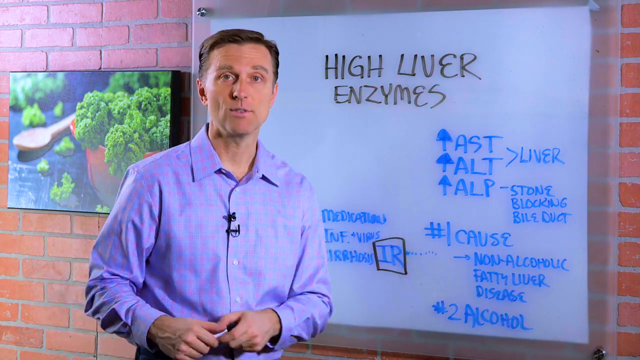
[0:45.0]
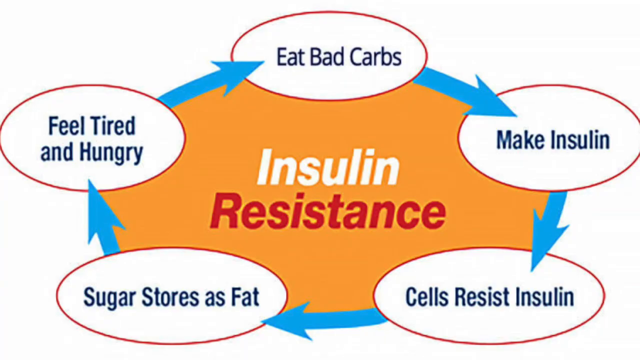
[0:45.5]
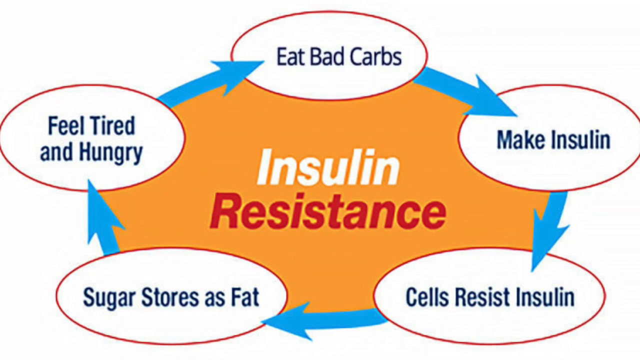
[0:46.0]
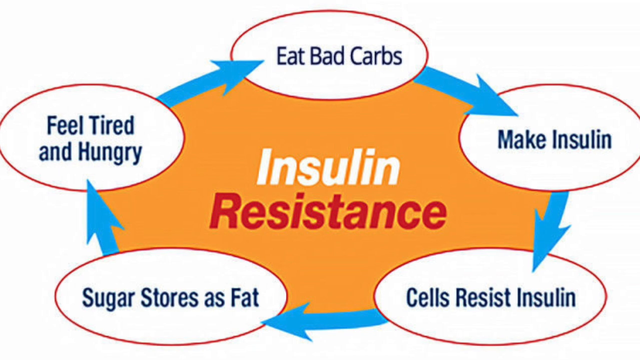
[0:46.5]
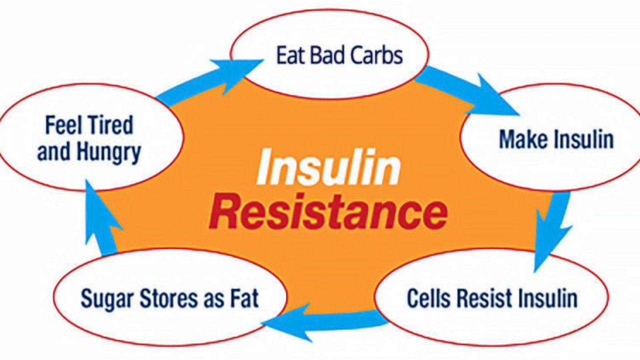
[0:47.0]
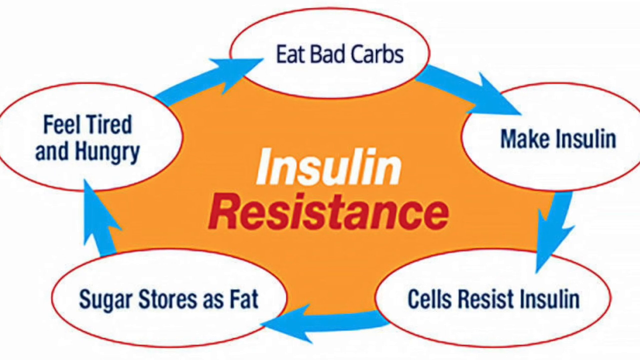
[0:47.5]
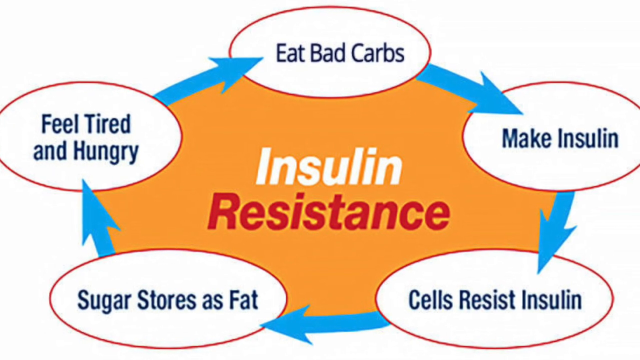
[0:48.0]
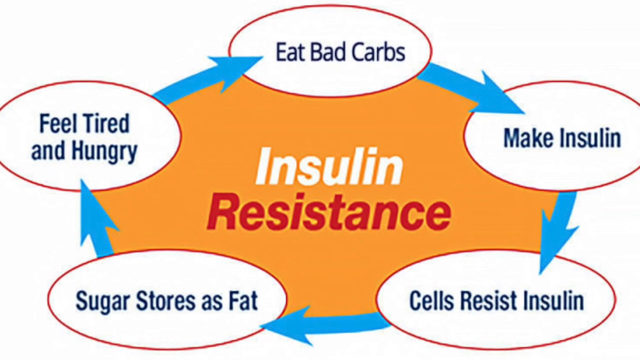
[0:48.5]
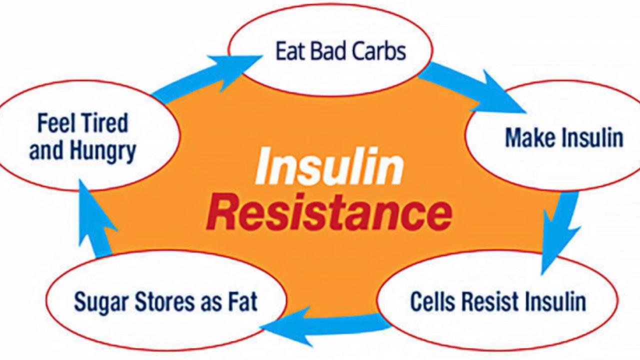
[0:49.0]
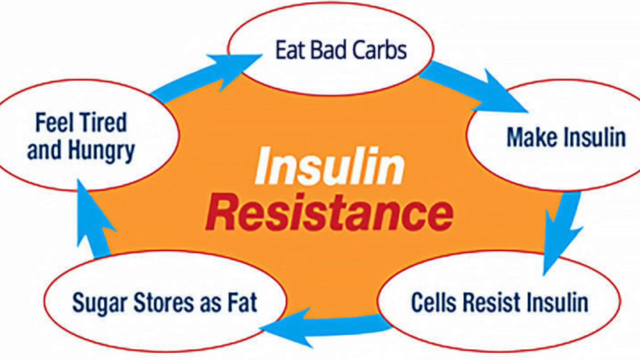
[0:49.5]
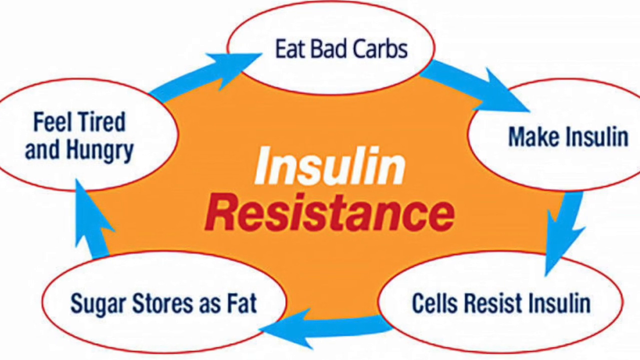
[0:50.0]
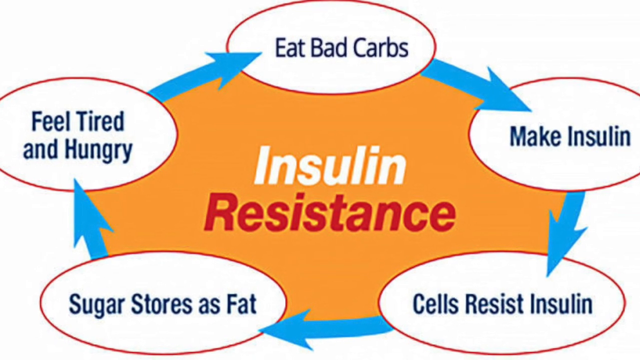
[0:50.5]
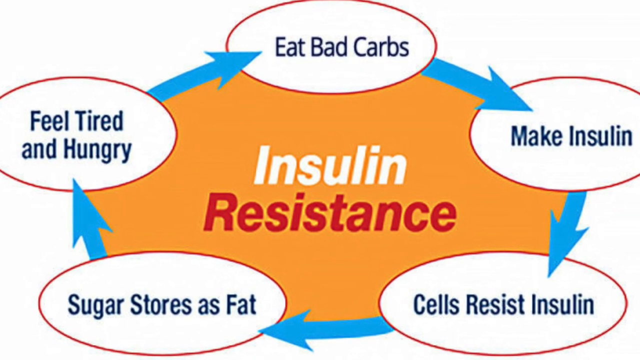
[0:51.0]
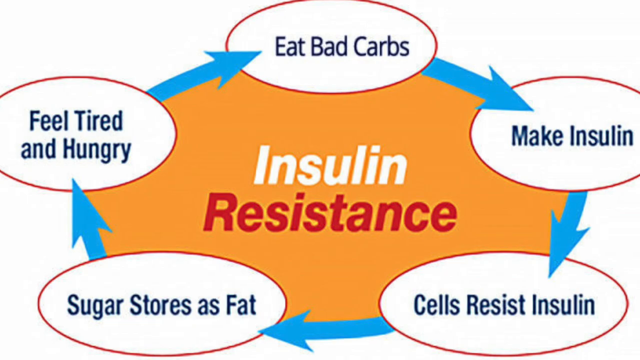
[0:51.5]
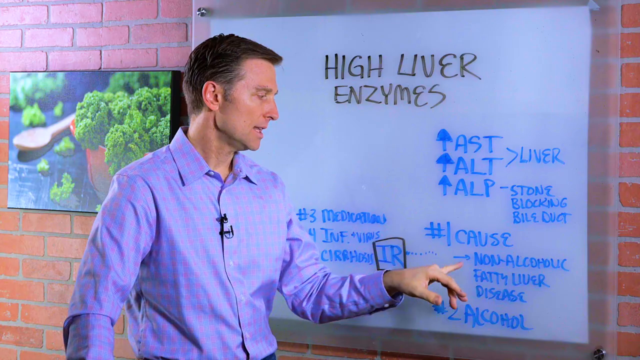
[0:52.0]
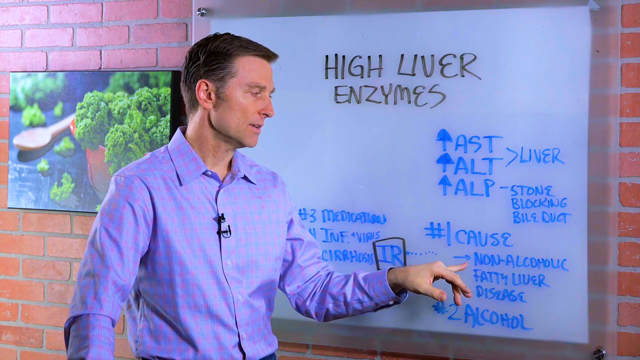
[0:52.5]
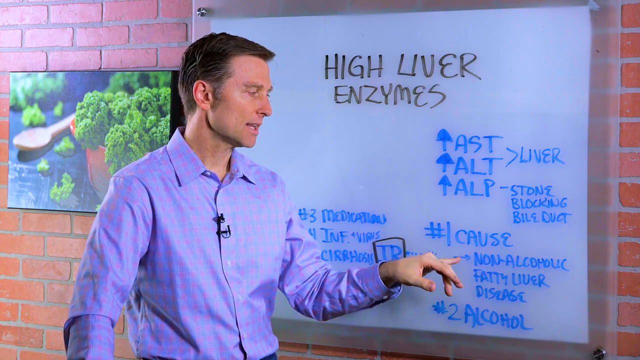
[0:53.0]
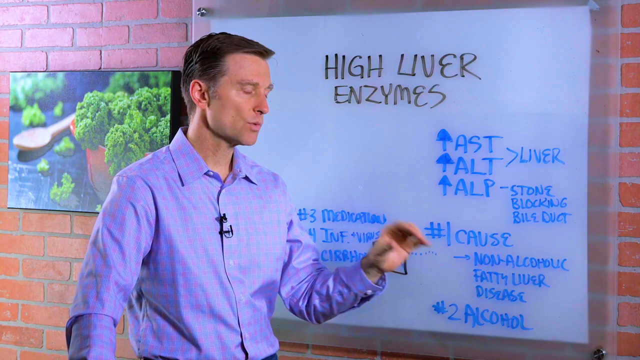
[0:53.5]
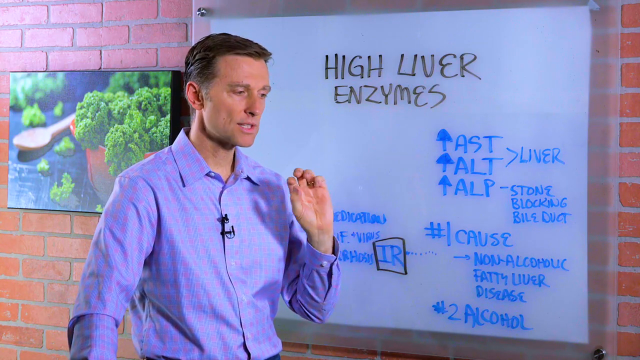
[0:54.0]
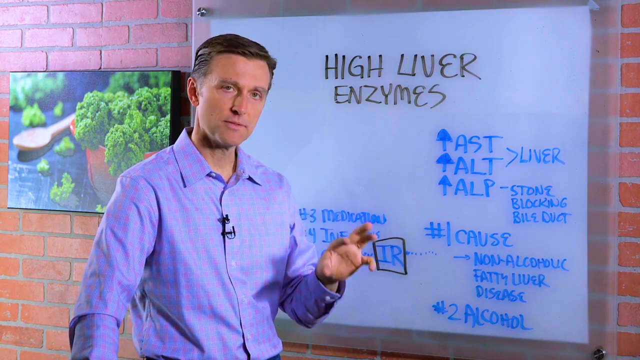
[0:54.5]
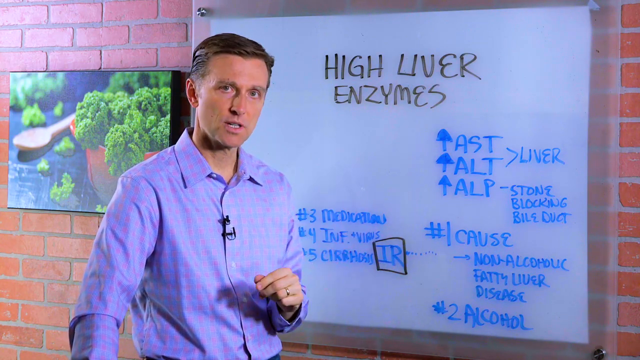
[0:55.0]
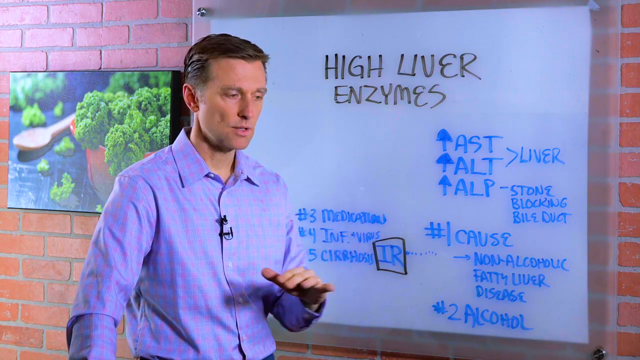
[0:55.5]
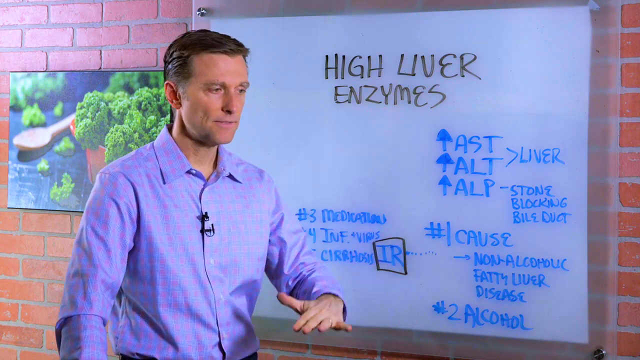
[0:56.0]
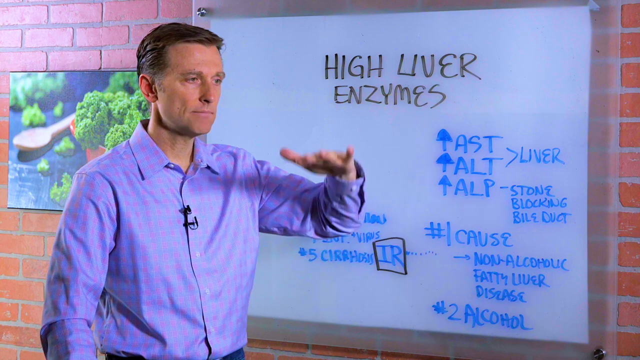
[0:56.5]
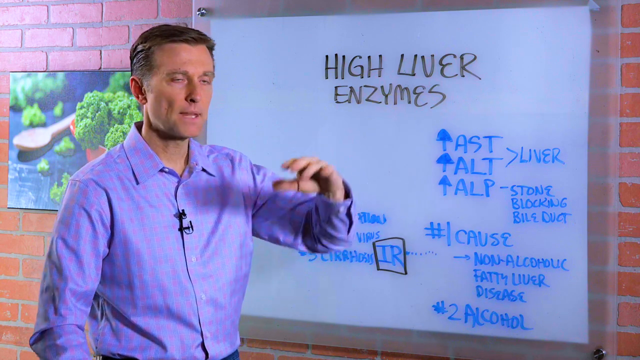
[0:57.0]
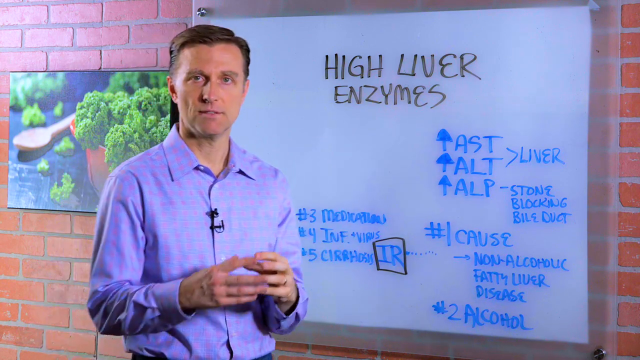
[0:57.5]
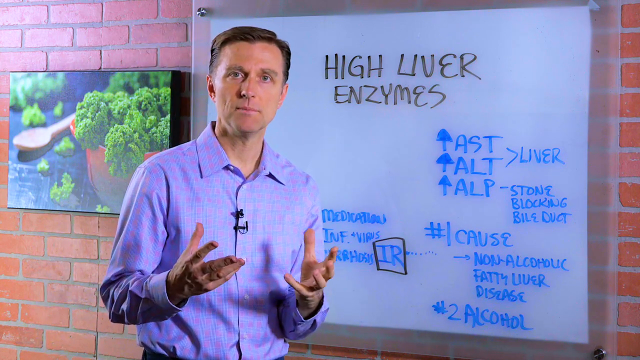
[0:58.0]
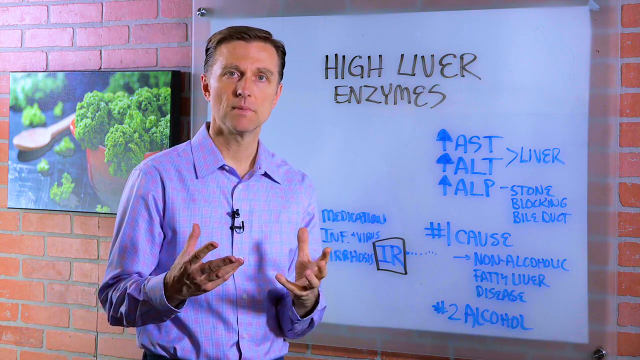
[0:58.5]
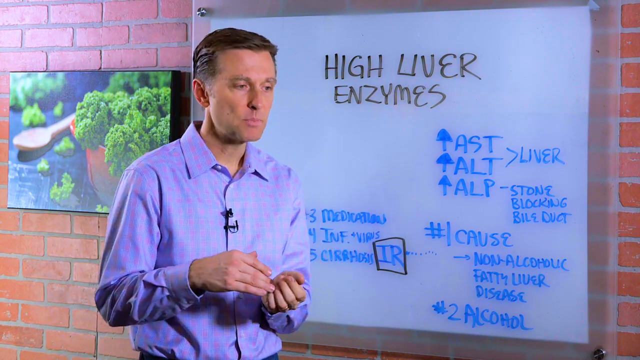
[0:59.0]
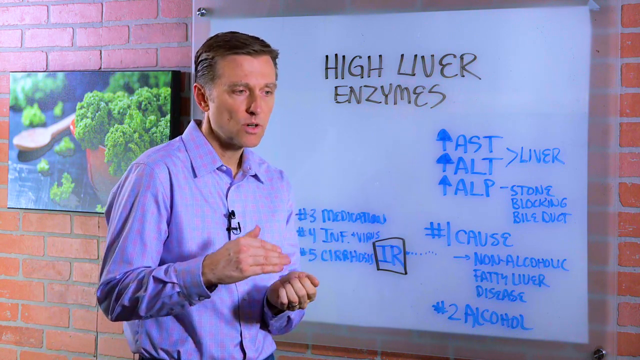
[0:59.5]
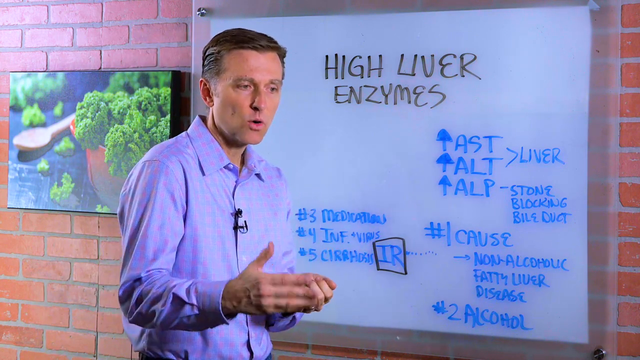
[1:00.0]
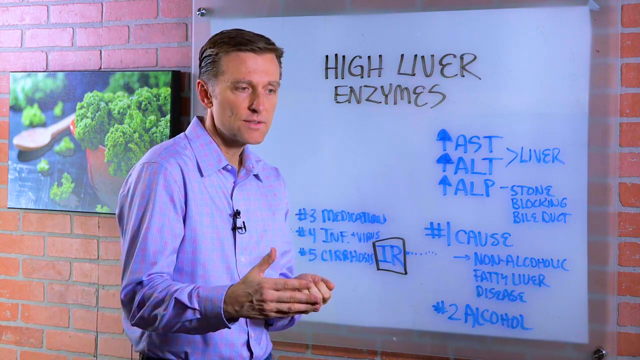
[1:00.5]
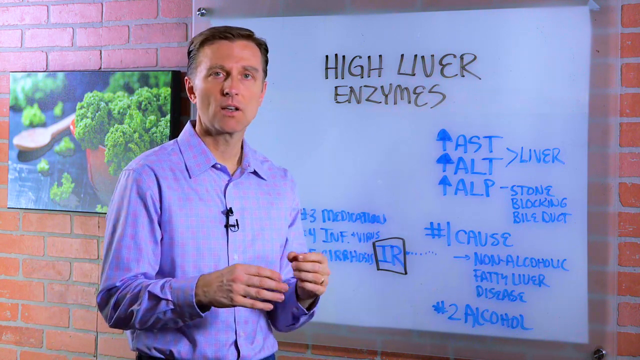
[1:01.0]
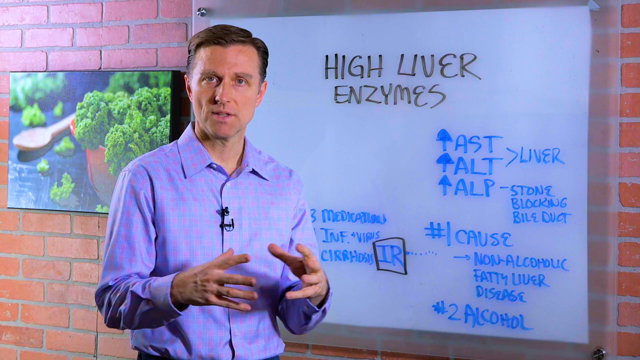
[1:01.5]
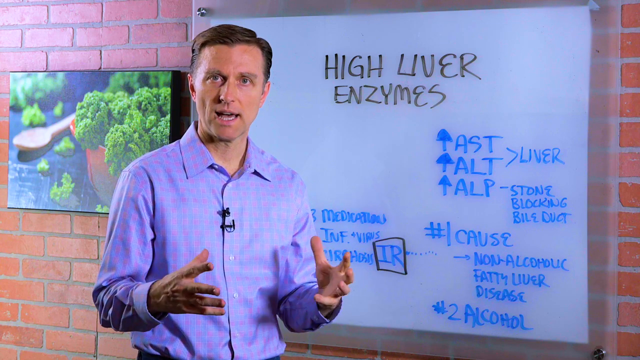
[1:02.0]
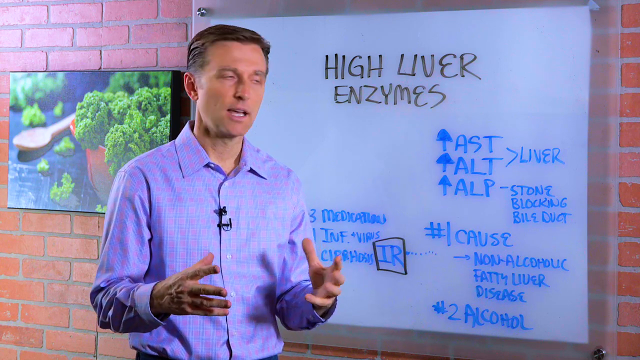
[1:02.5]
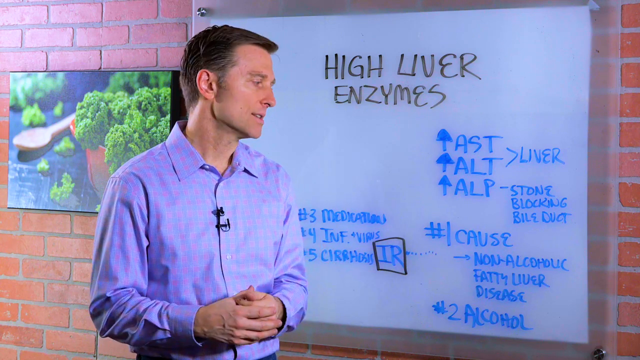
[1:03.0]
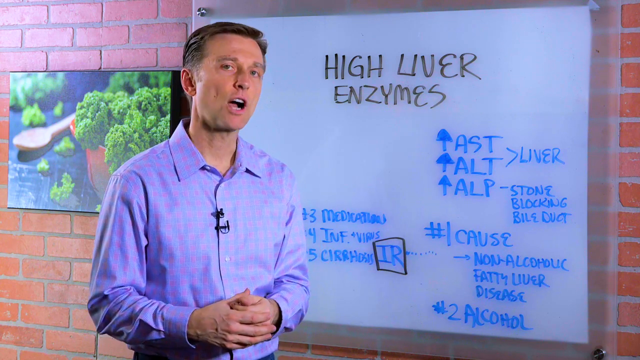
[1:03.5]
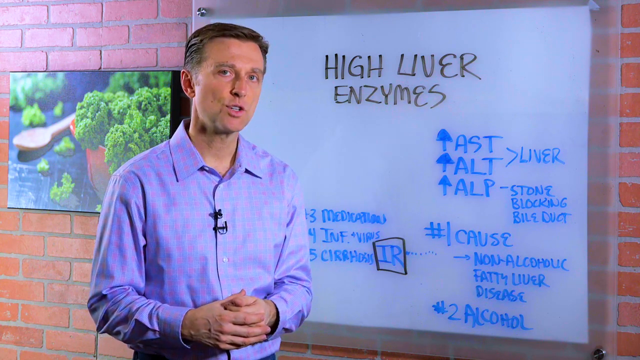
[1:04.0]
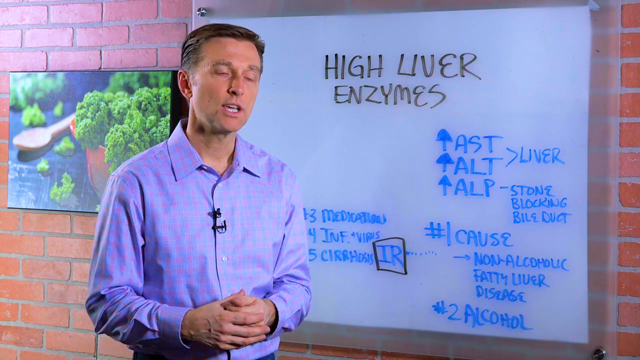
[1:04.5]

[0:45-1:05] A storyboard appears on the screen titled "the main causes of insulin resistance." On the left is a blue circular arrow going clockwise through "feeling hungry" and "tired and hungry." The camera goes back to the man, who talks to the camera, makes a gesture like height with his hands, and makes a ball shape with his hands. The storyboard reads "insulin resistance" on yellow, with "insulin" in white writing and "resistance" in red. Back on screen, the man raises one hand and uses the other to gesture outward to show width. Text includes "eat bad carbs," "make insulin," "cells resist insulin," "sugar stores as fat" and "non-alcoholic fatty liver disease," which the man points at while gesturing.